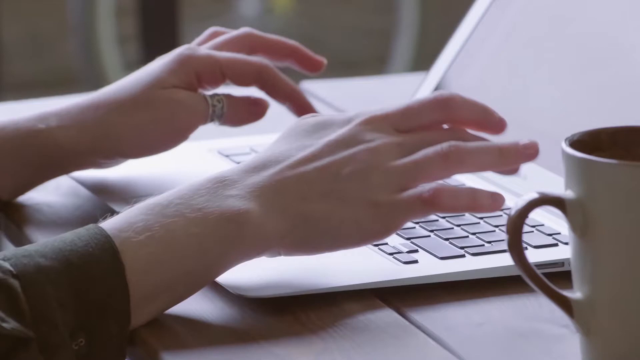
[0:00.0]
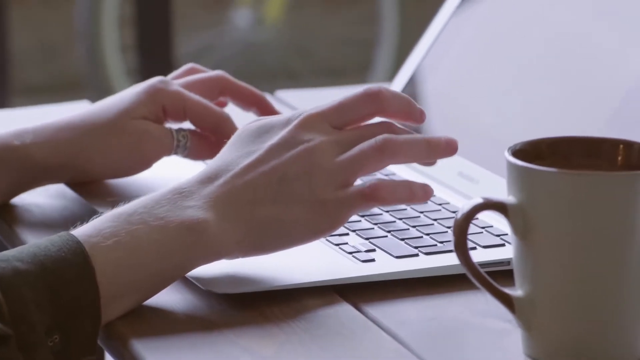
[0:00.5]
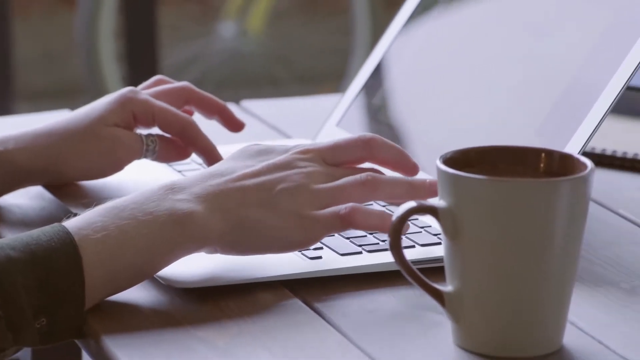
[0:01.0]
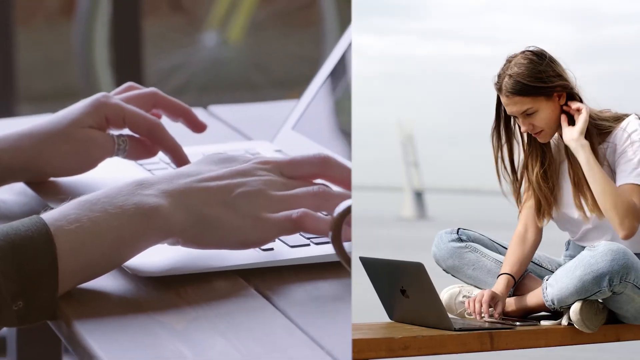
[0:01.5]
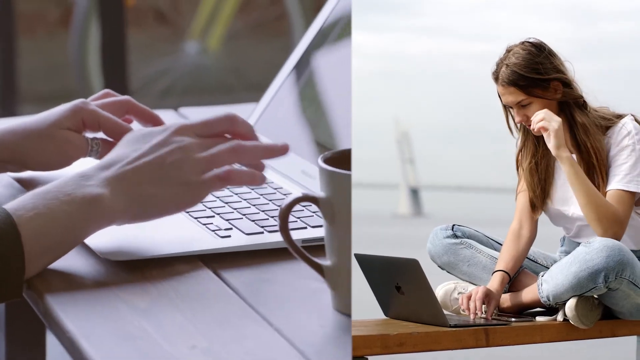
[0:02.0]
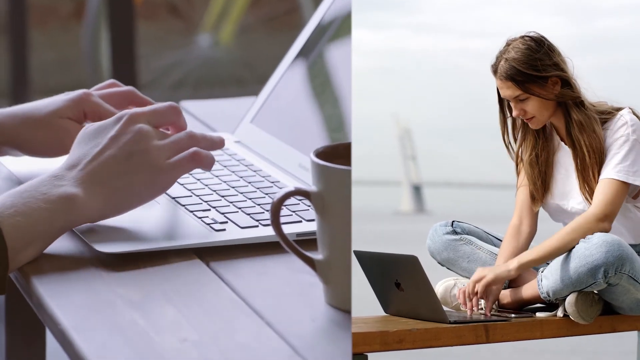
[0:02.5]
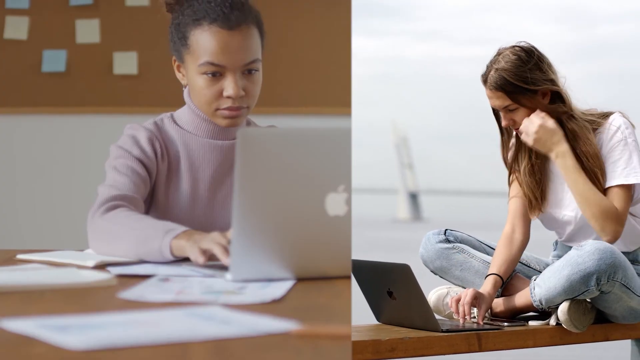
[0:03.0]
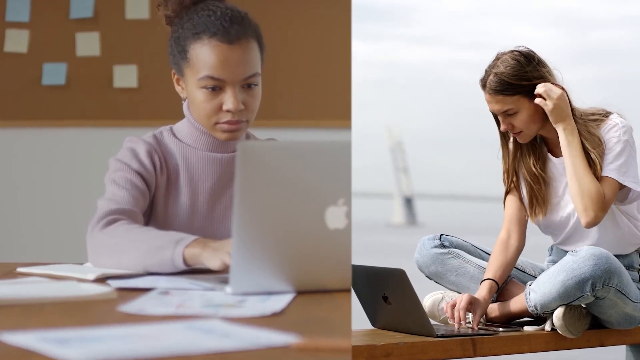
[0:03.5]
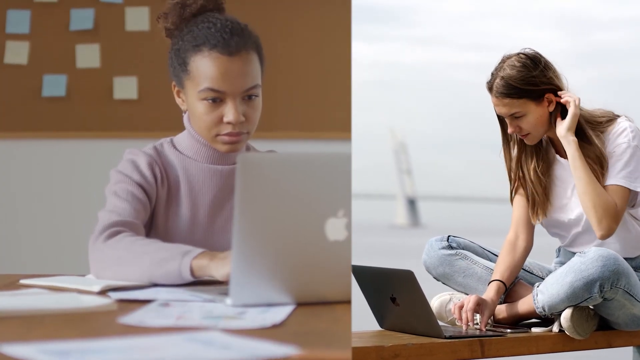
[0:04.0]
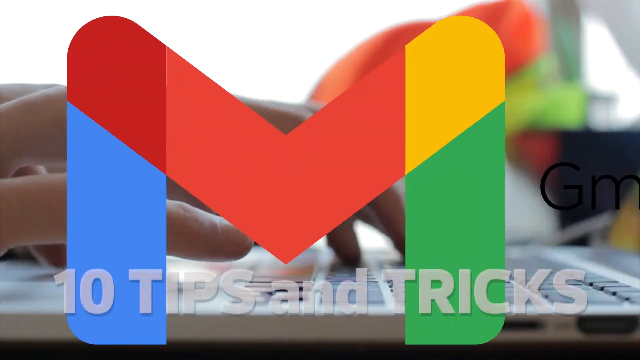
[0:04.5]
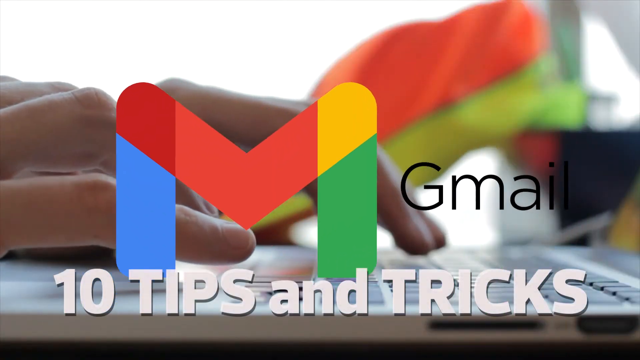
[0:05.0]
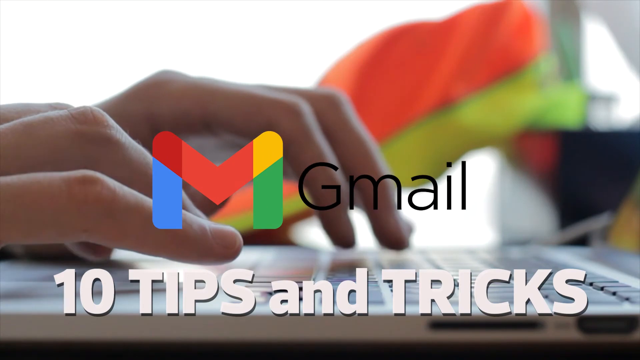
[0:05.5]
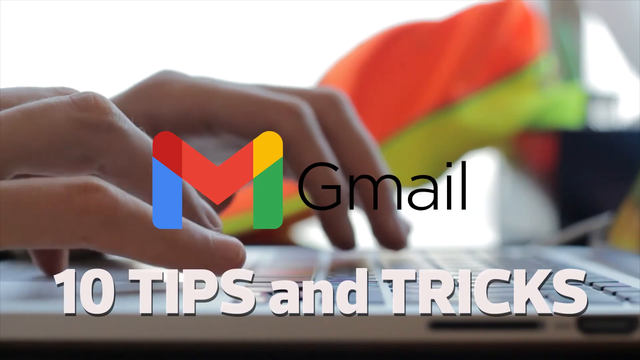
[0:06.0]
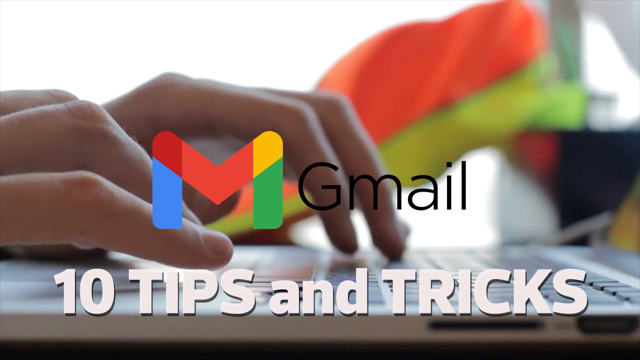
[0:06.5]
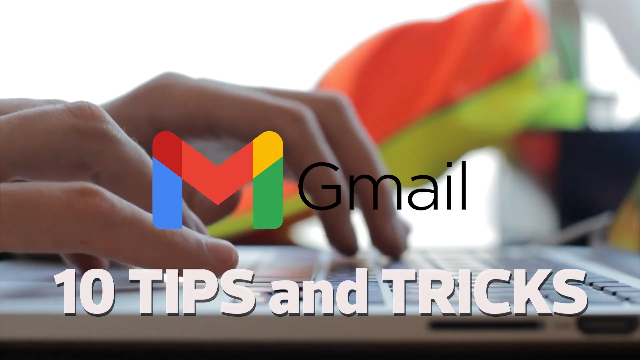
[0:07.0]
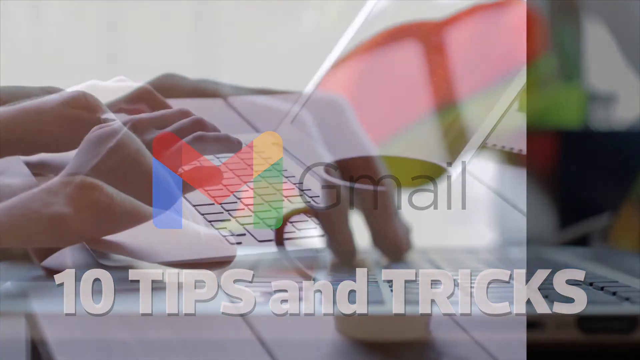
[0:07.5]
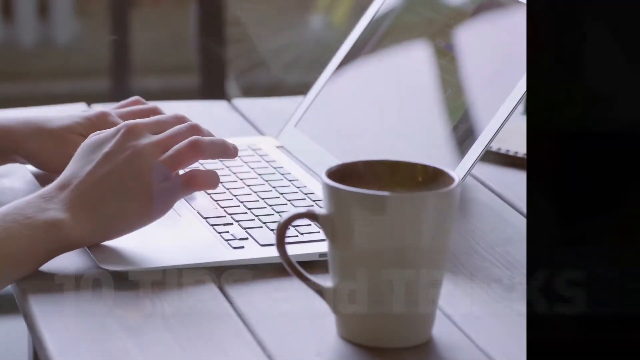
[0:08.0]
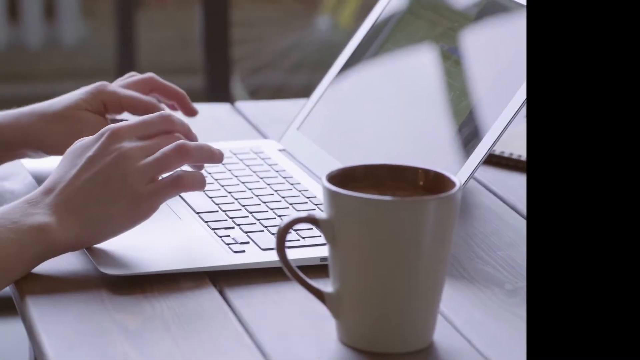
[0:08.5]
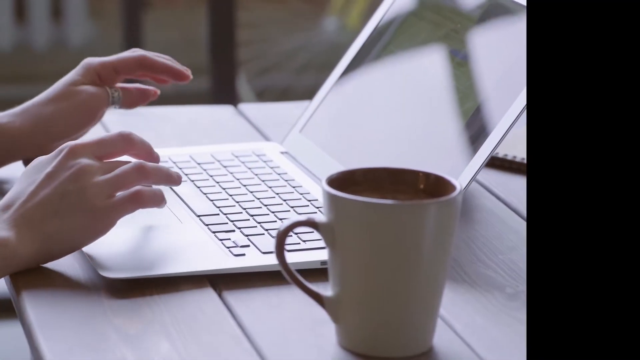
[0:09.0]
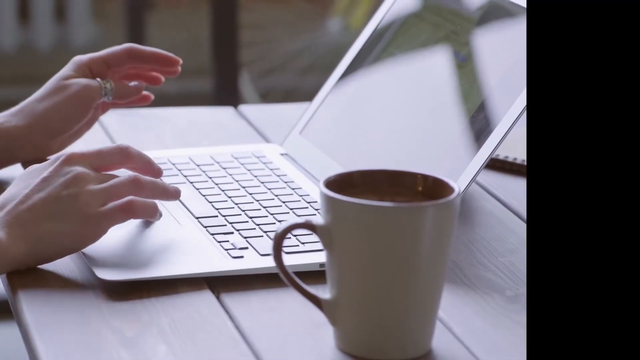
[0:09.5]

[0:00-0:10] Two hands type on a laptop keyboard, with a coffee mug beside the laptop on the table. On the right side of the screen, a girl sits on the ground using a laptop outside in the wind. Halfway through, the left side changes to another angle of a woman typing on the keyboard, this time viewed from behind the laptop. The camera then switches to a low-angle view of fingers typing on the laptop keyboard, with Gmail and the Gmail logo popping up on the screen and "10 tips and tricks" below it. It then fades to an overhead low view of two hands typing and moving the trackpad on the laptop.